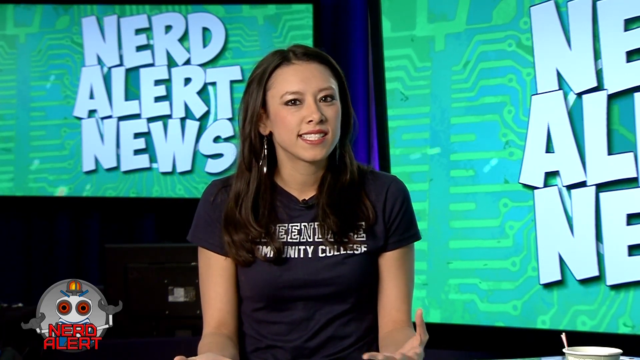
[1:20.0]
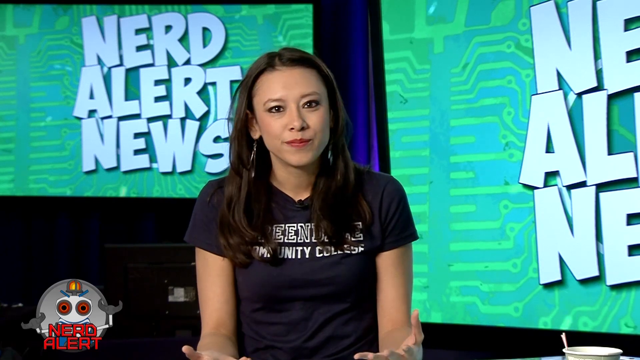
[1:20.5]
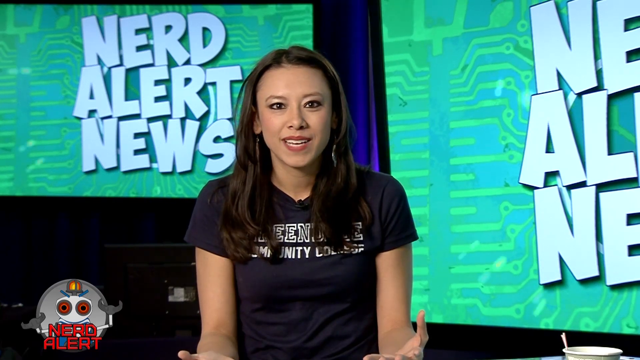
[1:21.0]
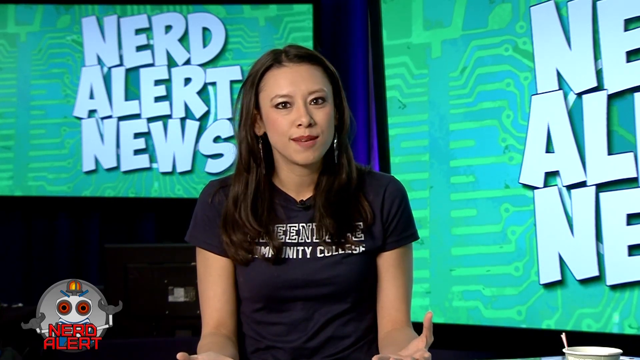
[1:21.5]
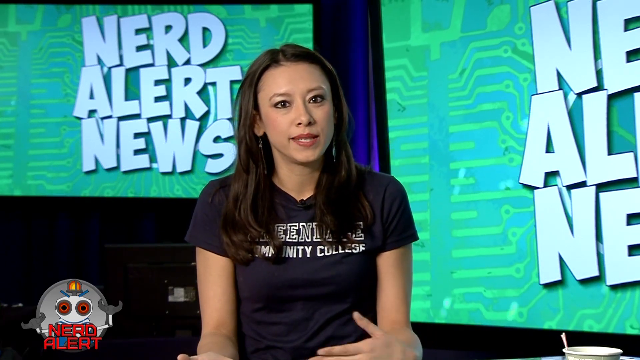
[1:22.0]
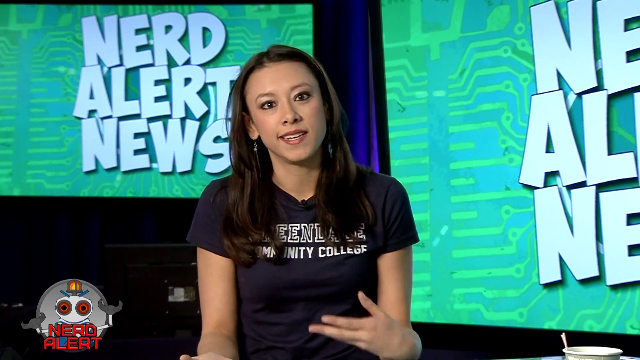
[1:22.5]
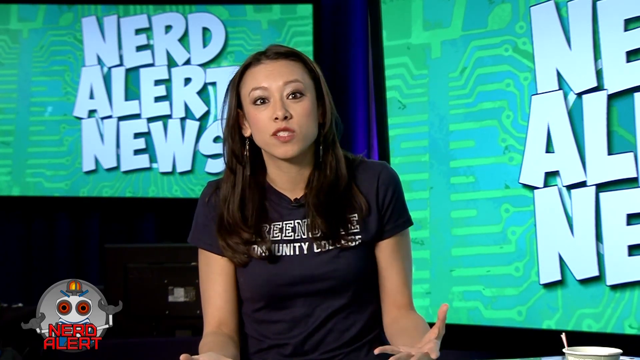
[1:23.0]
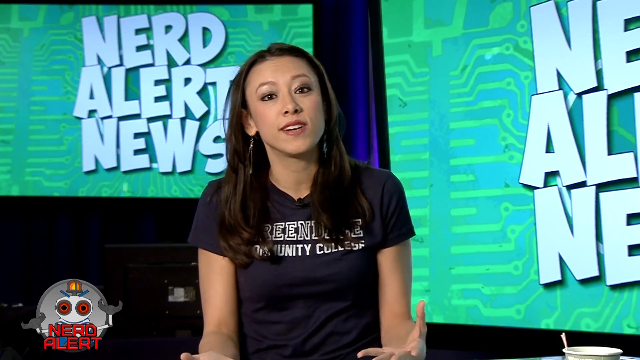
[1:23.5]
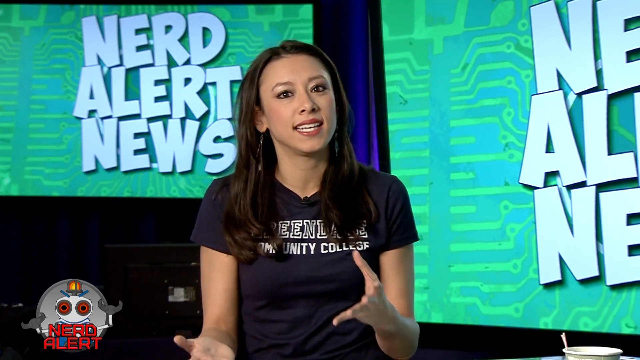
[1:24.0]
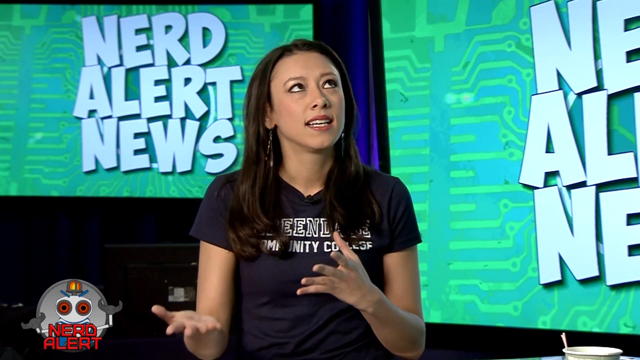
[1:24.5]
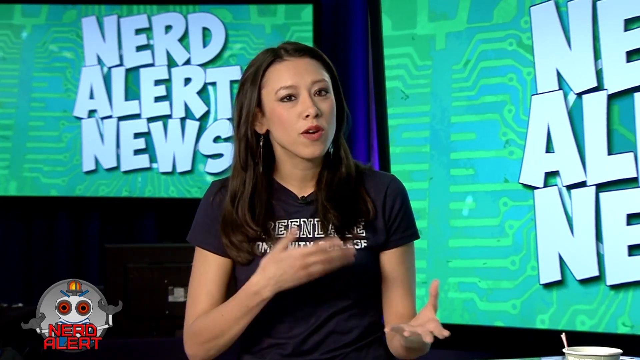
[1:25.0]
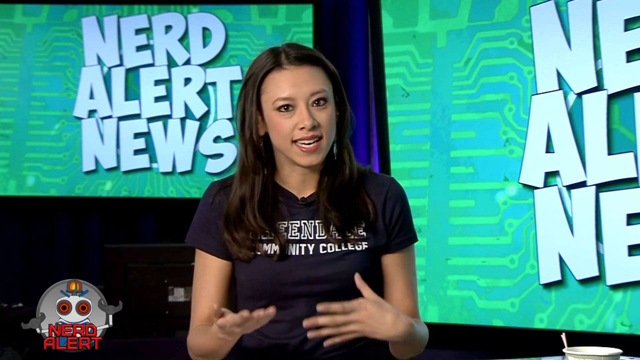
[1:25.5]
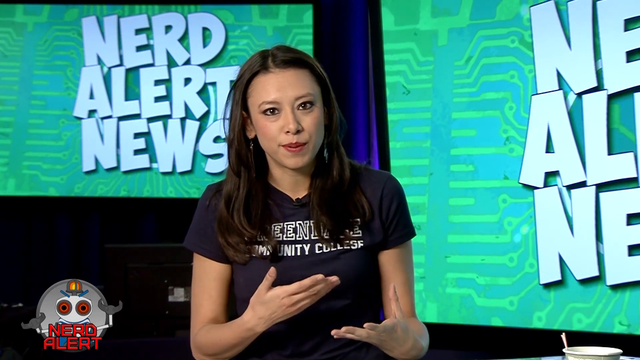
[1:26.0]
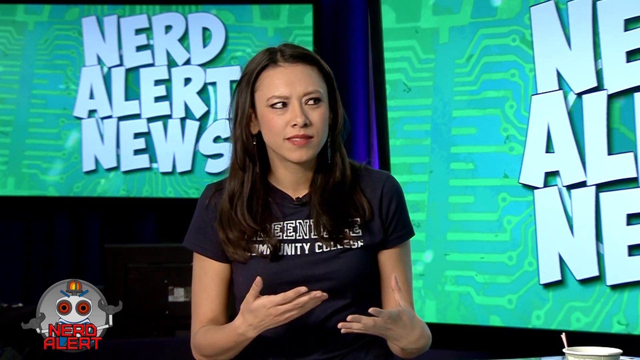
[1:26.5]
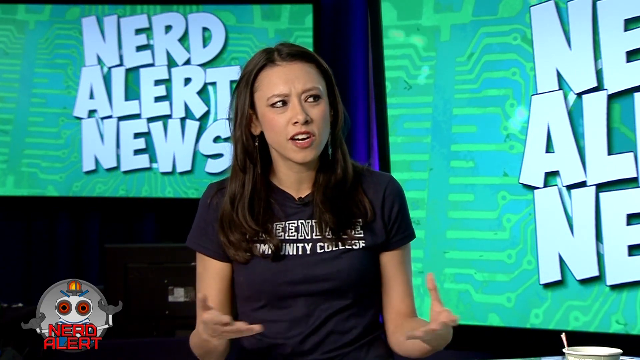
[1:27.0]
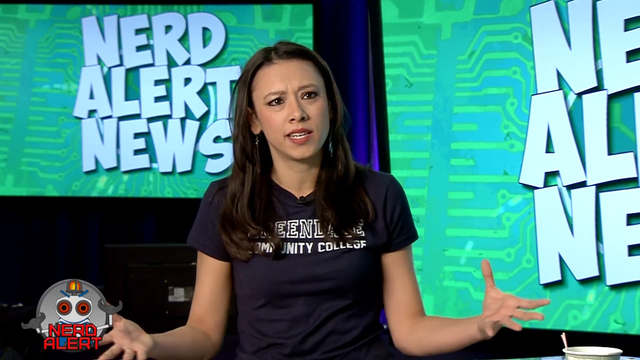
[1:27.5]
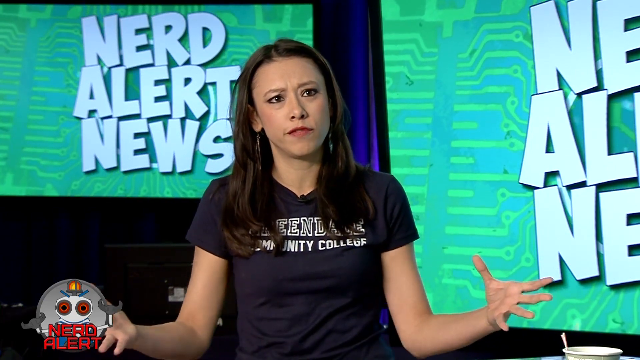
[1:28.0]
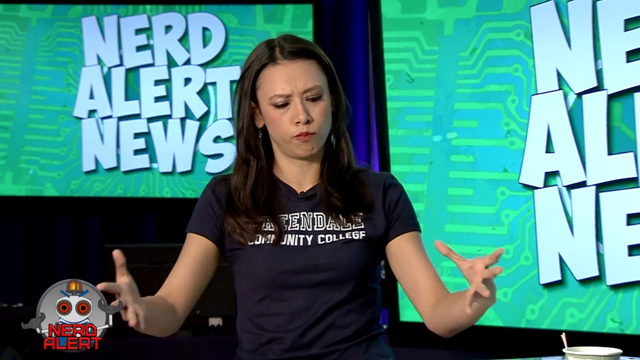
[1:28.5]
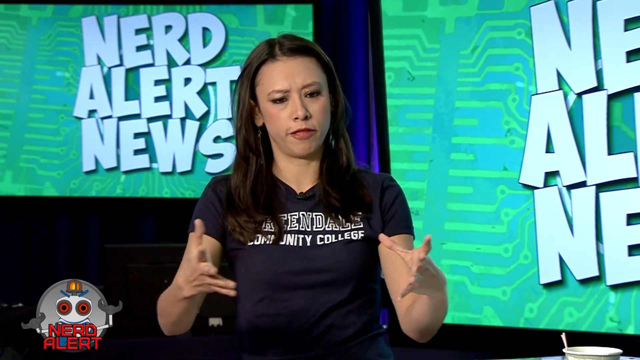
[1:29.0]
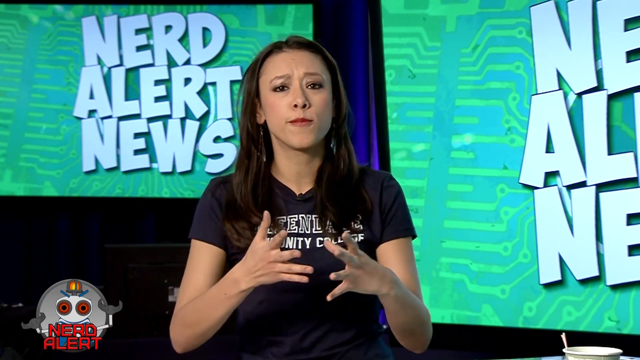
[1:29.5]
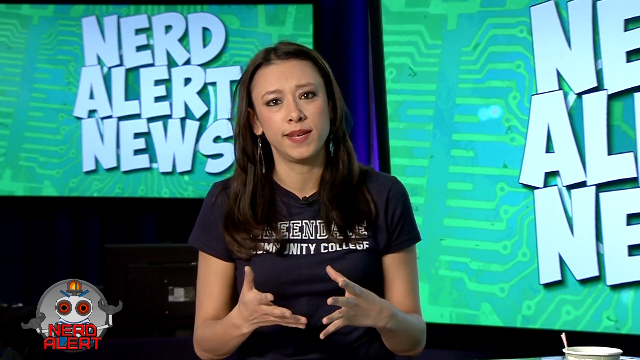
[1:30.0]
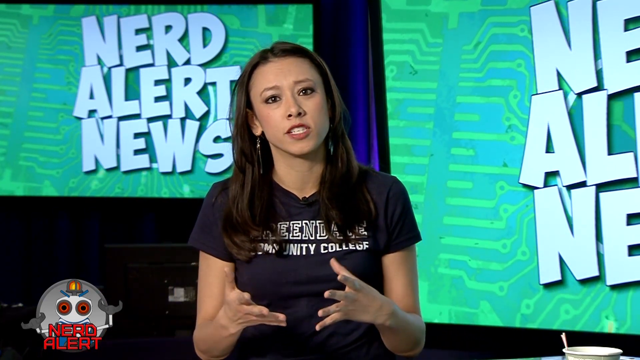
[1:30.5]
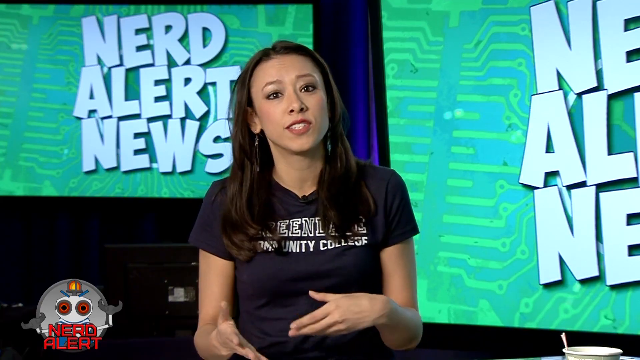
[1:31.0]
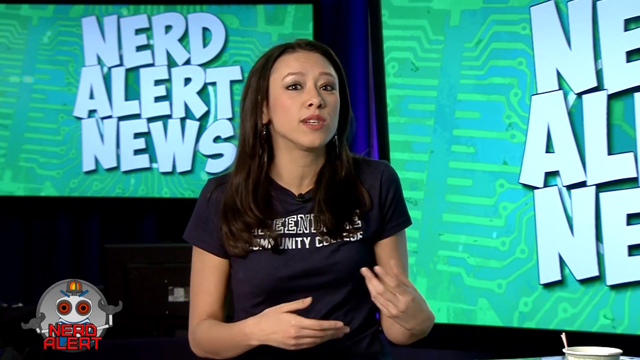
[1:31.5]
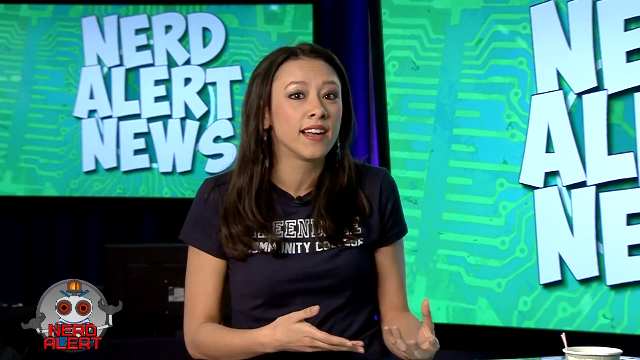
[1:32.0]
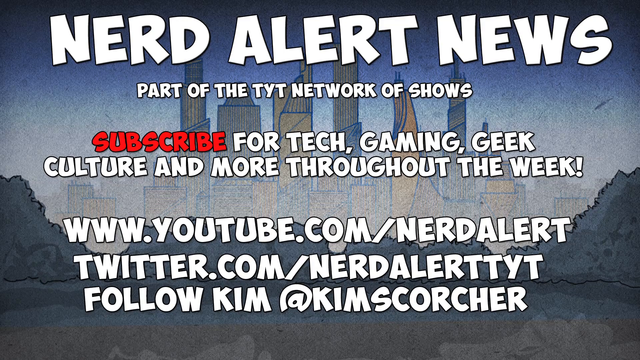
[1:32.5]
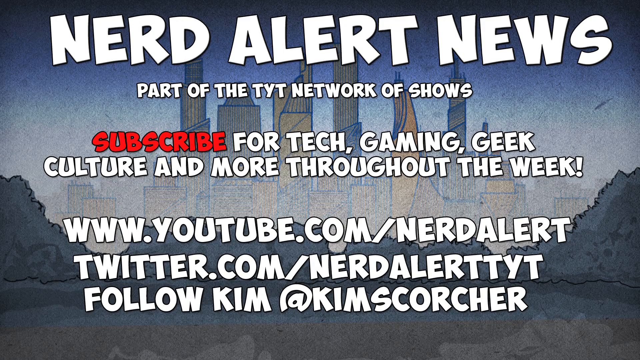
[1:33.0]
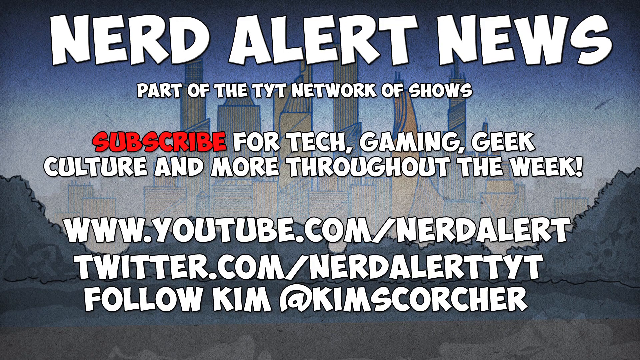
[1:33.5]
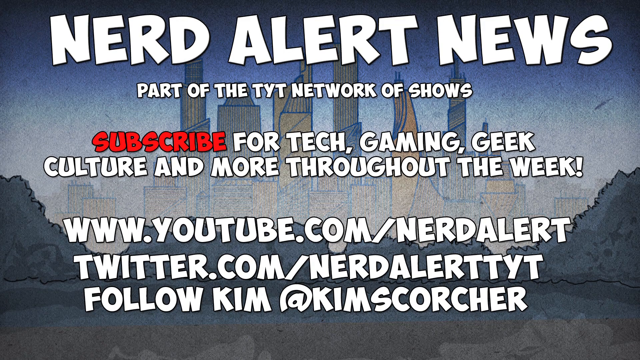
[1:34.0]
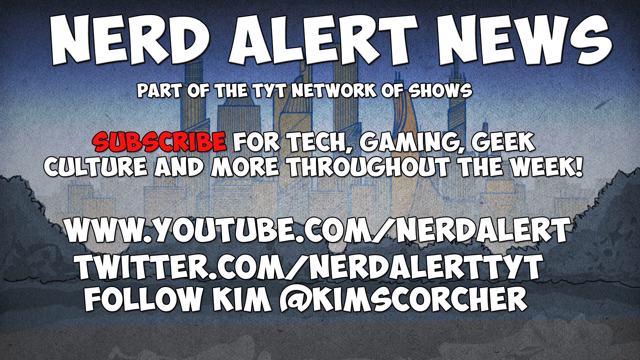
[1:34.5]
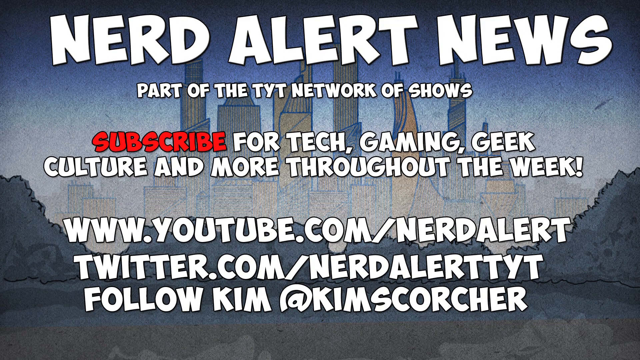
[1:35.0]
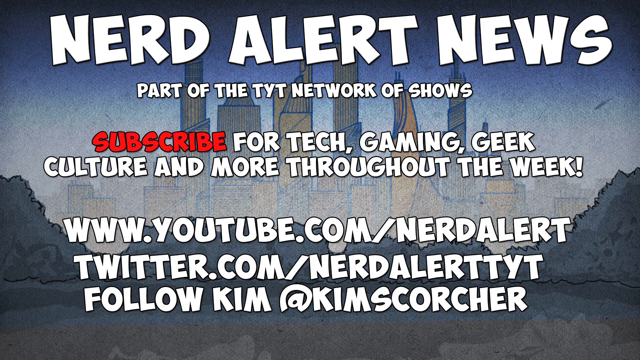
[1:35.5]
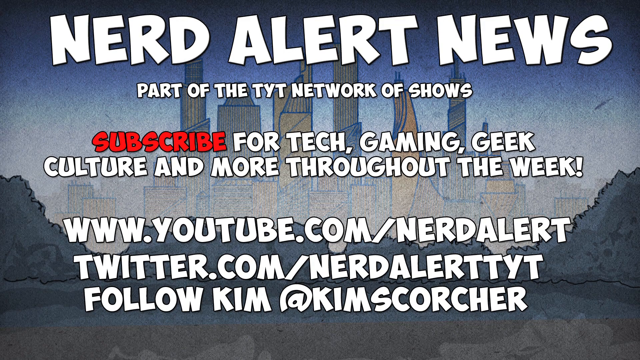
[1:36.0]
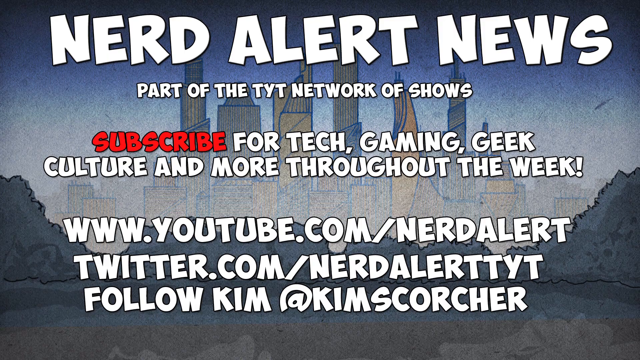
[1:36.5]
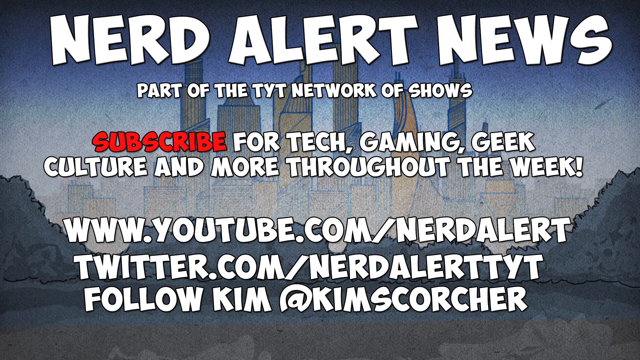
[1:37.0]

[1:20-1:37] A closing screen promotes the show, with text stating it is "part of the TYT network of shows" and "subscribe for tech gaming geek culture and more throughout the week." YouTube and Twitter addresses for the nerd alert page are listed, encouraging viewers to follow the page.